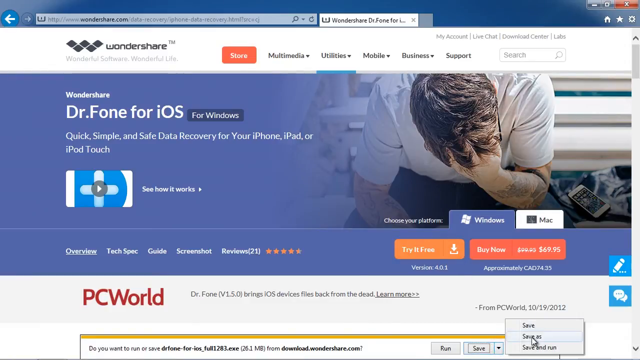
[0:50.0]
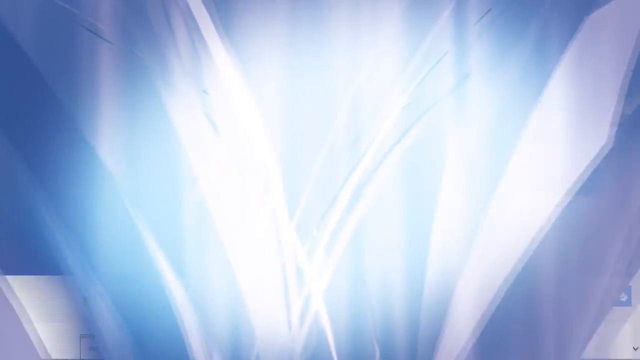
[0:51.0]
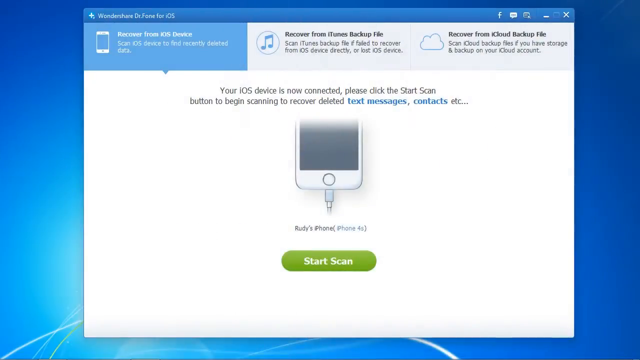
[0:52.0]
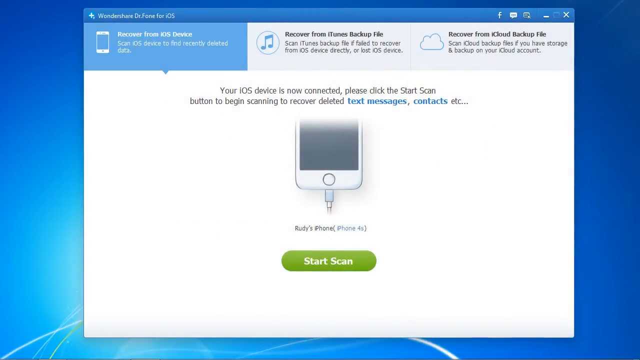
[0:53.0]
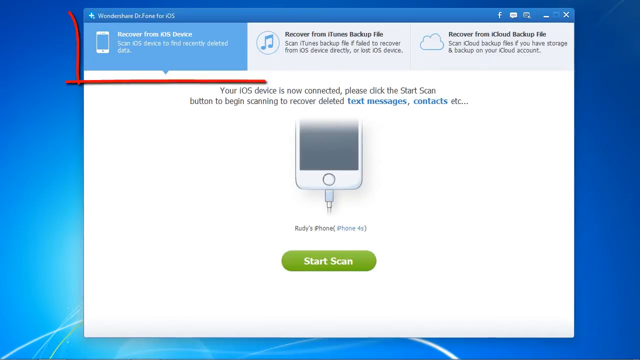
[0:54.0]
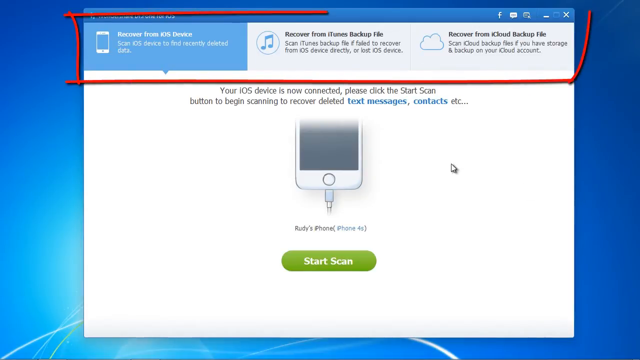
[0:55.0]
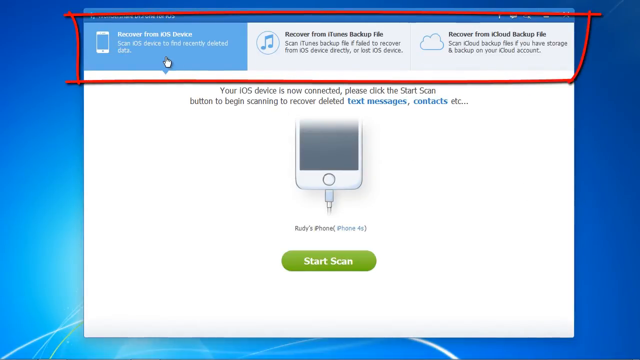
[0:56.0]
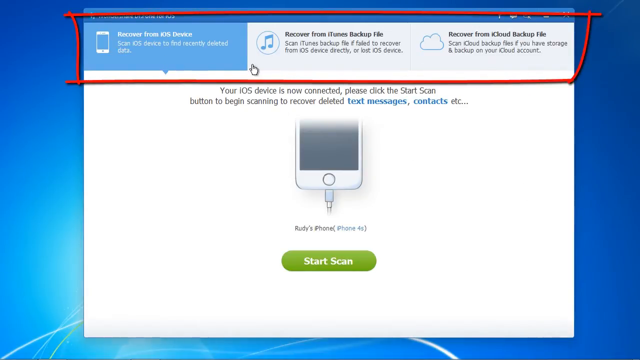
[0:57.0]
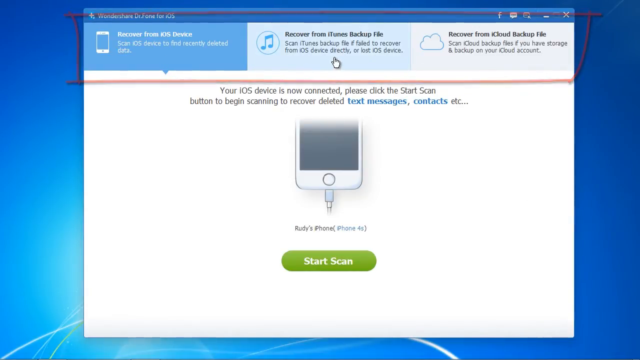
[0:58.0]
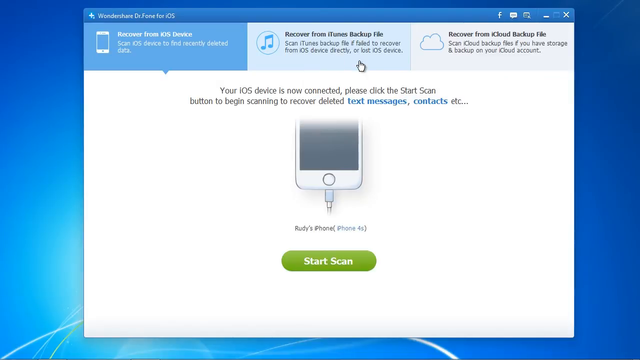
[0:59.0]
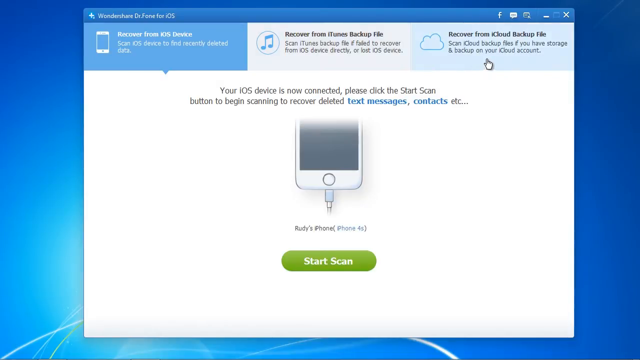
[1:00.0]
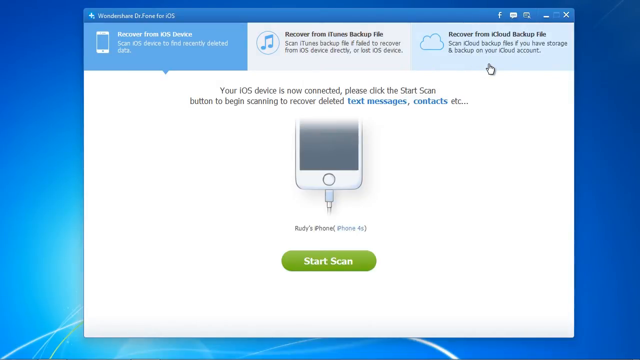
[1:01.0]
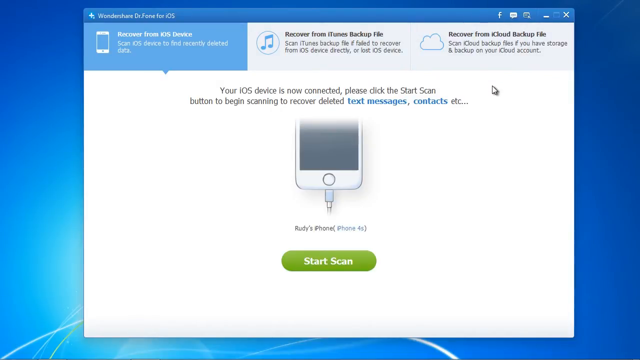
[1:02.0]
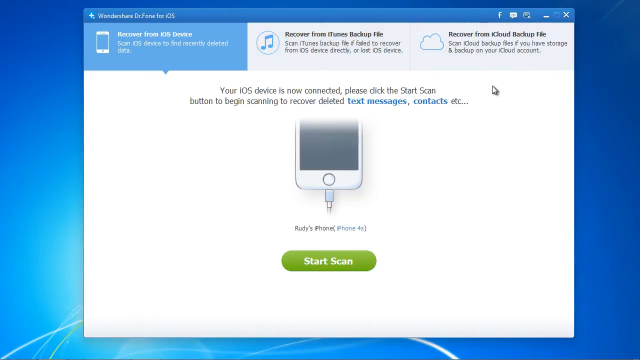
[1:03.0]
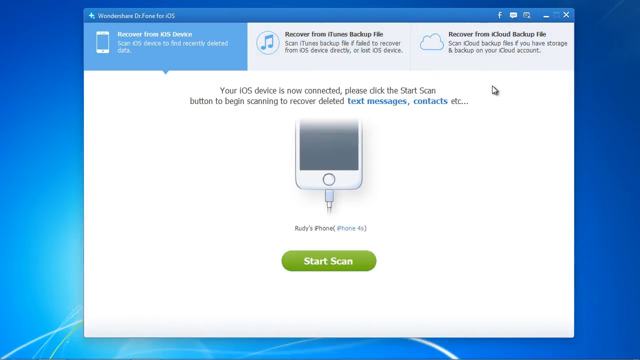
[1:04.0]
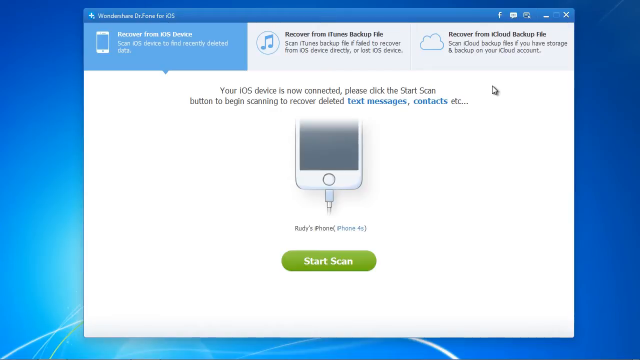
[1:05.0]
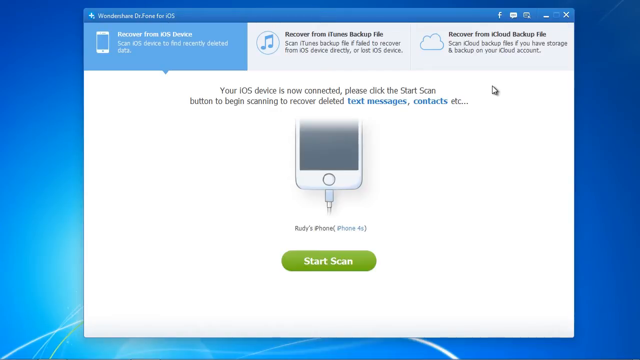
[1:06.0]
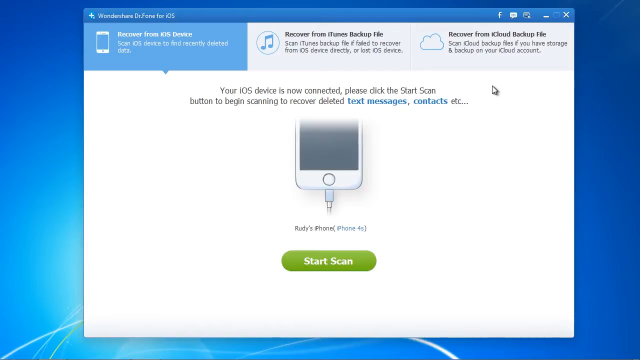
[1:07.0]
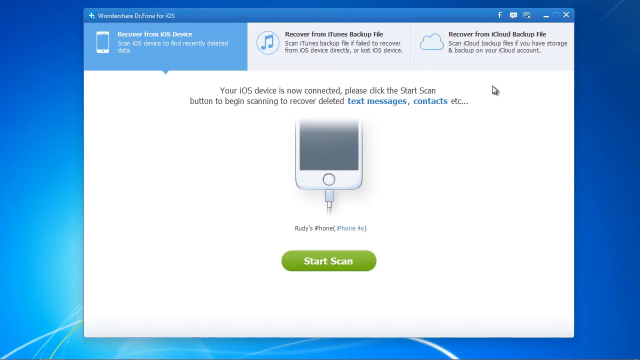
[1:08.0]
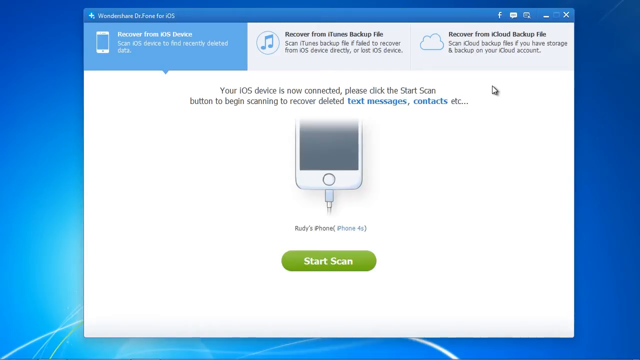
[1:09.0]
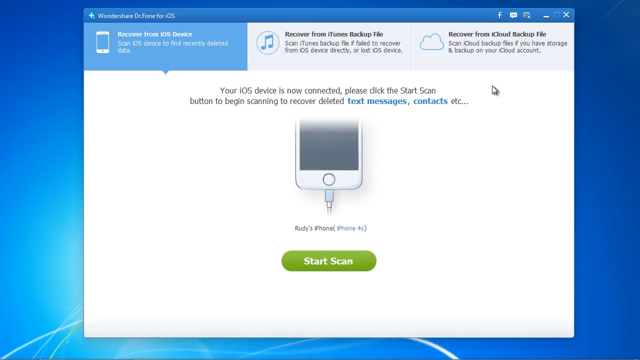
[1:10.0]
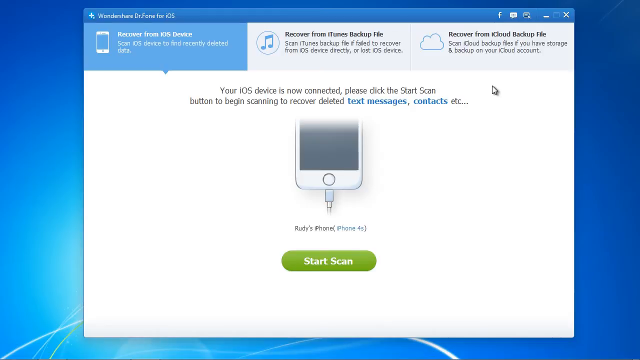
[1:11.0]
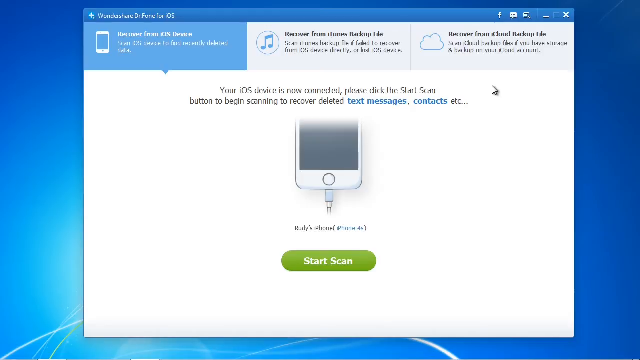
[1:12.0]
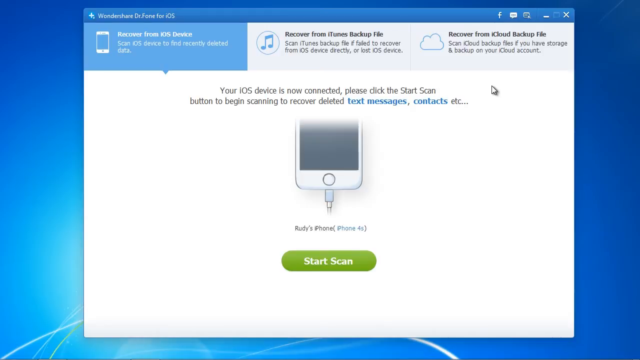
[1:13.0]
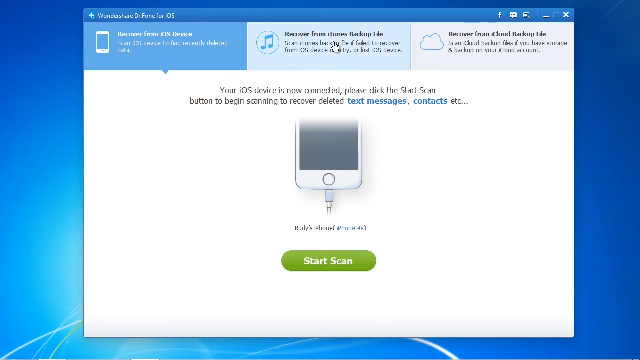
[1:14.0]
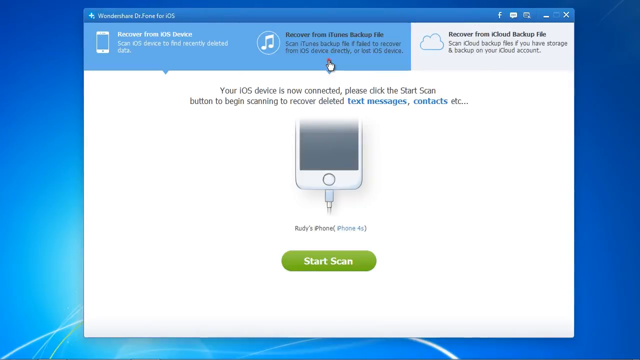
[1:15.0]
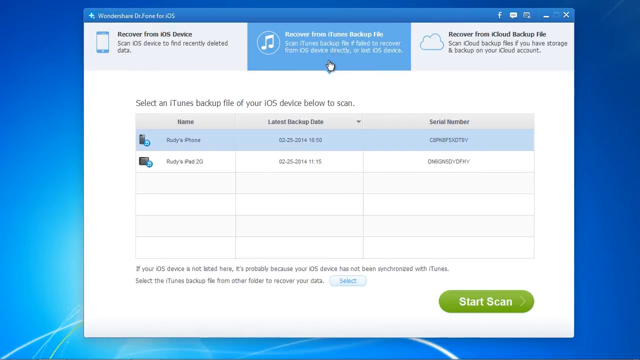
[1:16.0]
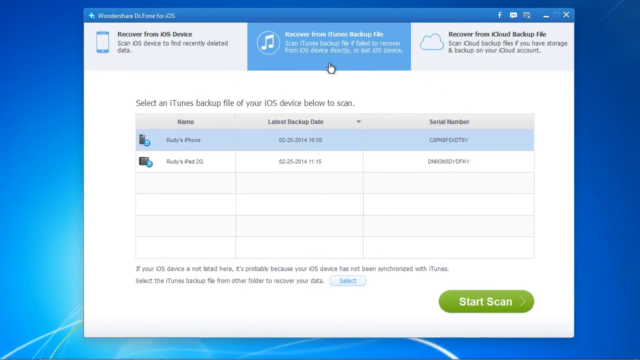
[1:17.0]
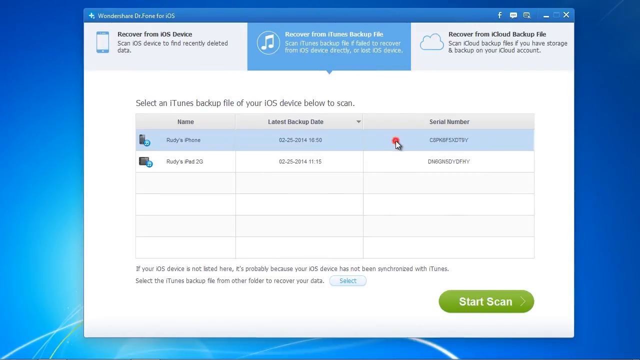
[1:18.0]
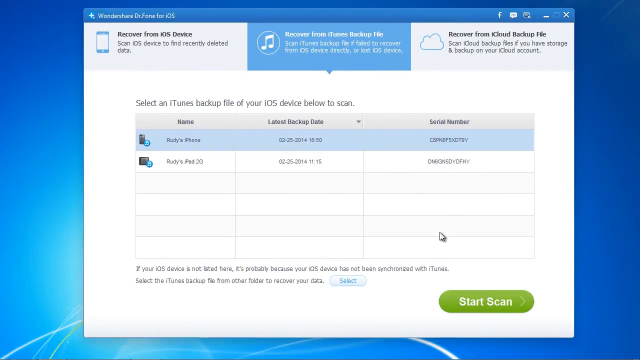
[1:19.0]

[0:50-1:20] A web page for Wondershare.com is shown. At the top left it says "Wondershare" next to its logo, a large W made up almost of cubes. There appear to be top menu drop-down options for multimedia, utilities, mobile, business, and support. Below that is apparently an ad for Dr. Phone for iOS, which seems to also be available for Windows. It says "quick, simple, and safe data recovery for your iPhone, iPad, or iPad touch," and there appears to be a video showing how it works. All of this is next to a photo of a man wearing a white shirt with his head in his hands. The user apparently clicks the "try it for free" section. The screen then shows how to use the product: after connecting an iPhone, there are options for "recover from your iOS device," "recover from iTunes backup file," and "recover from iCloud backup file." Below an image of a phone is a green button for "start scan."